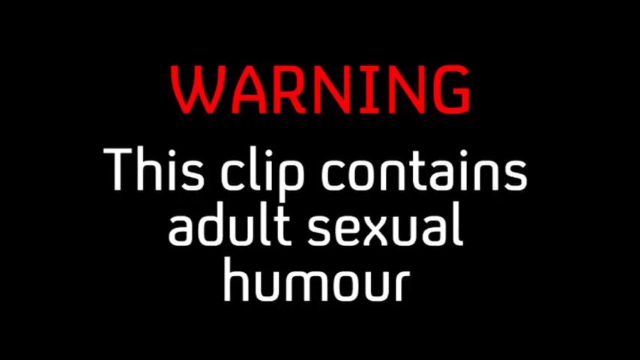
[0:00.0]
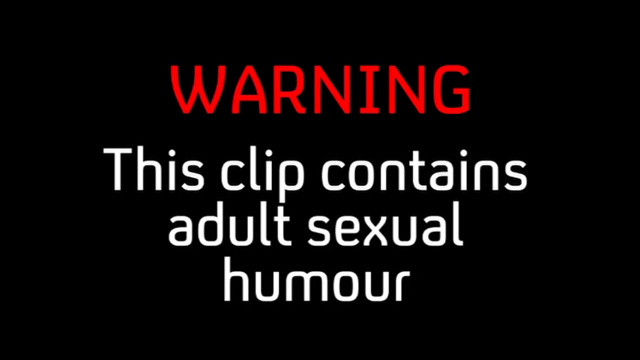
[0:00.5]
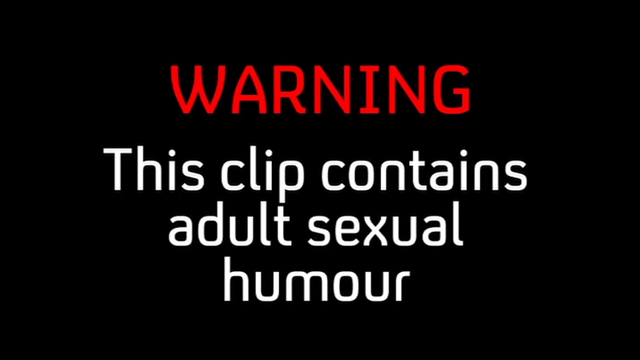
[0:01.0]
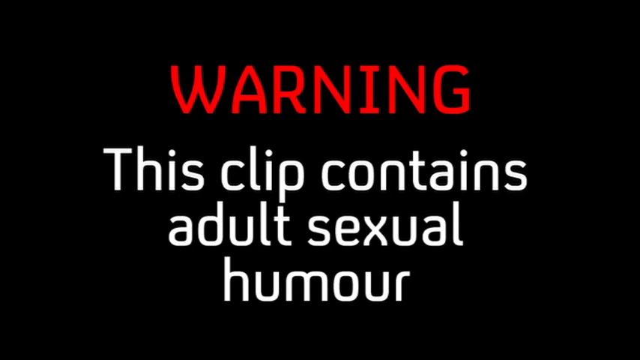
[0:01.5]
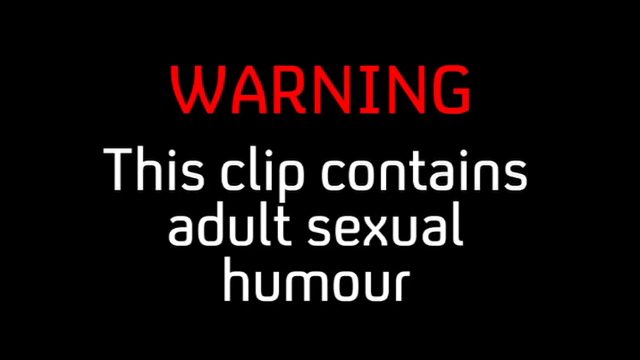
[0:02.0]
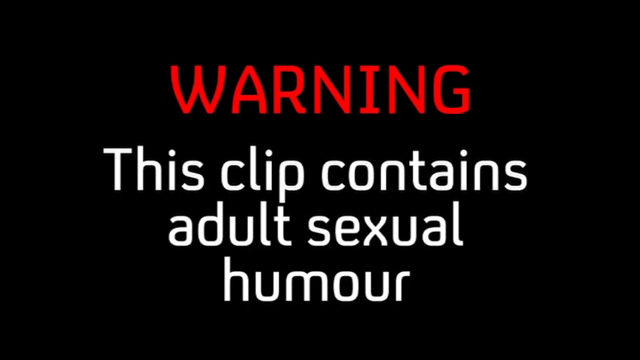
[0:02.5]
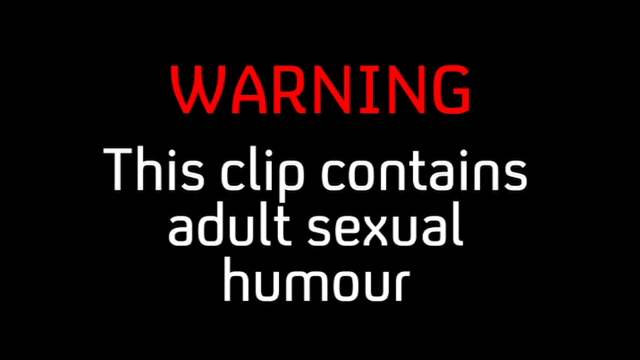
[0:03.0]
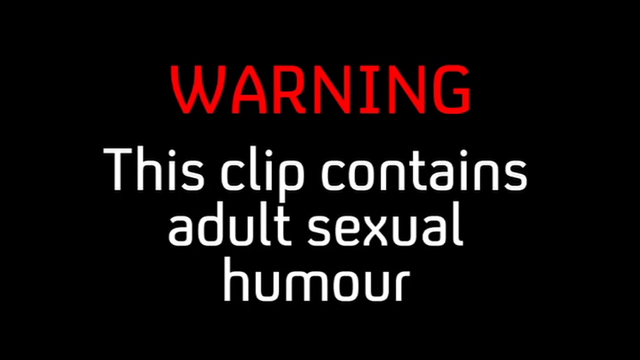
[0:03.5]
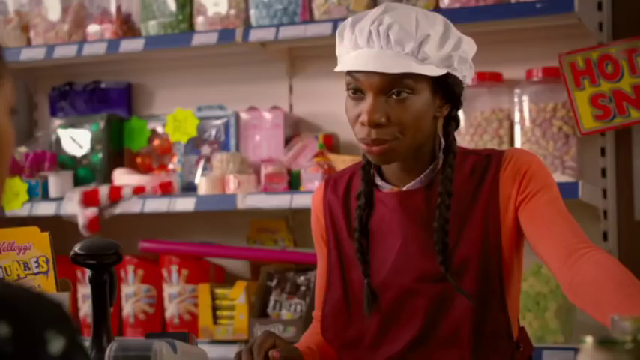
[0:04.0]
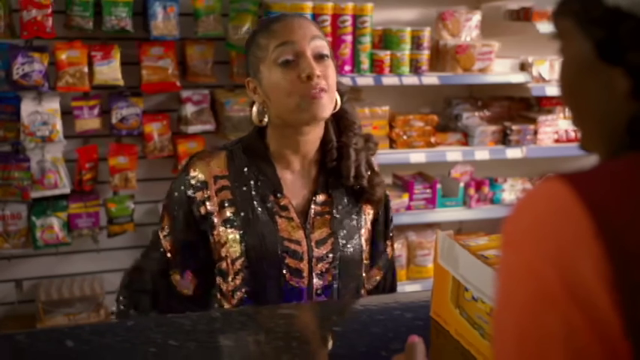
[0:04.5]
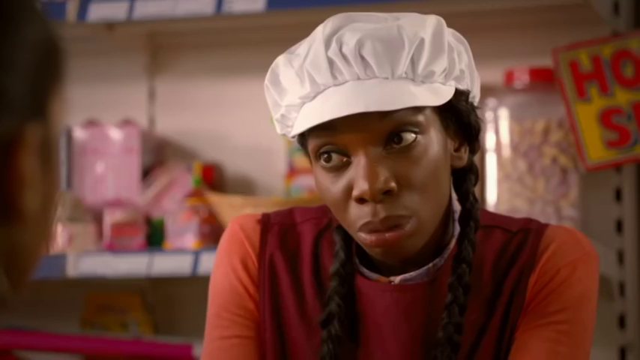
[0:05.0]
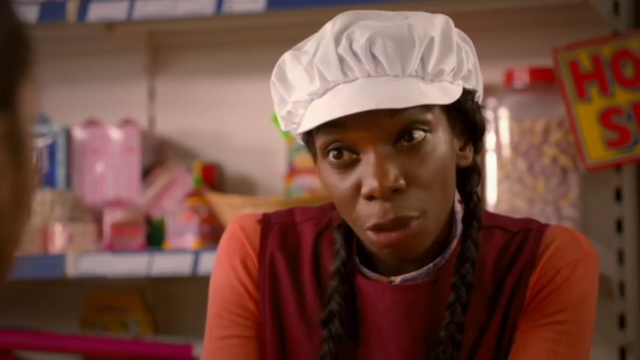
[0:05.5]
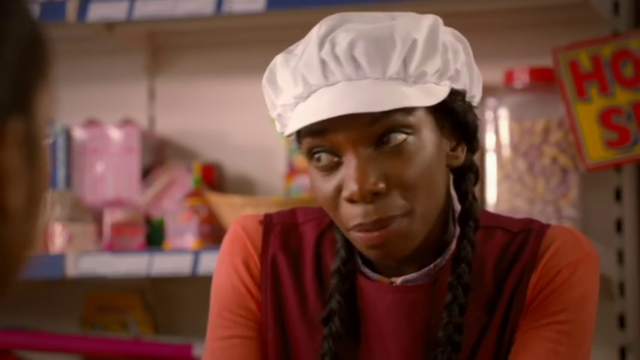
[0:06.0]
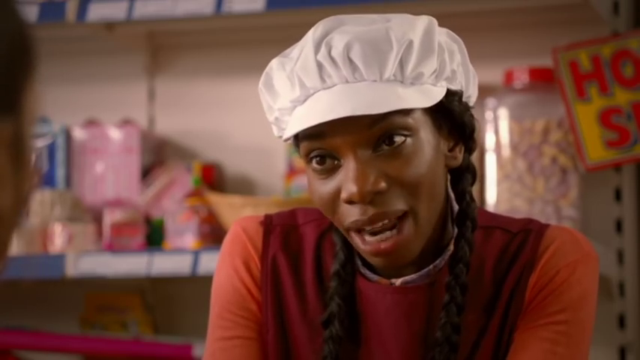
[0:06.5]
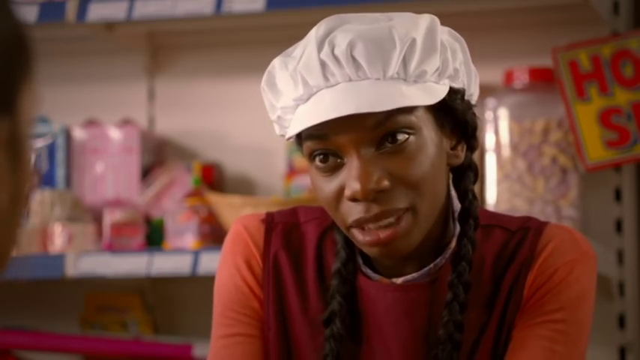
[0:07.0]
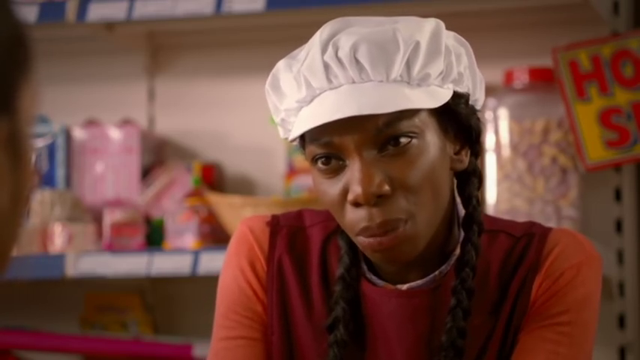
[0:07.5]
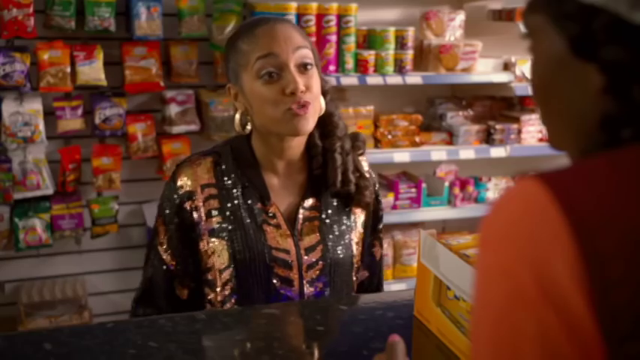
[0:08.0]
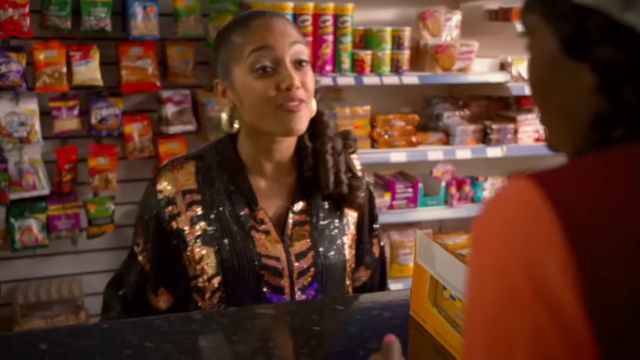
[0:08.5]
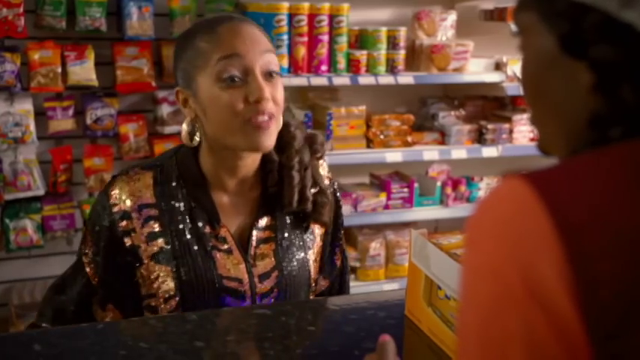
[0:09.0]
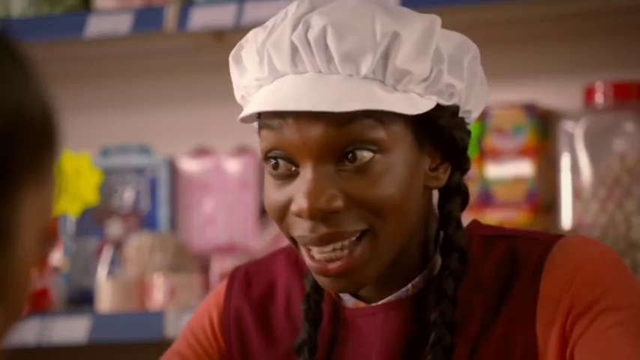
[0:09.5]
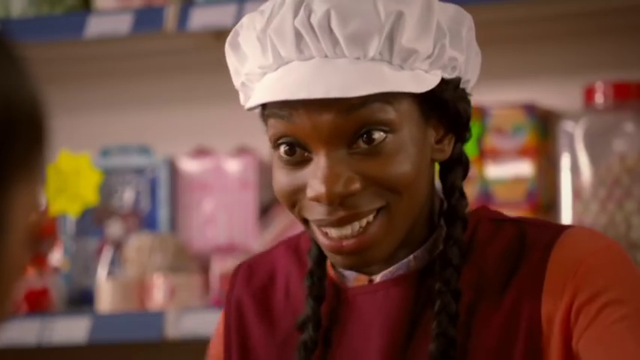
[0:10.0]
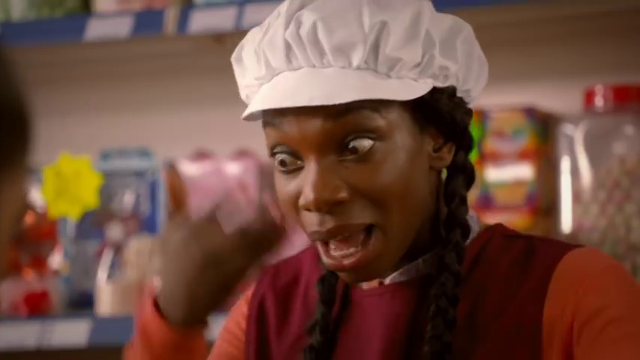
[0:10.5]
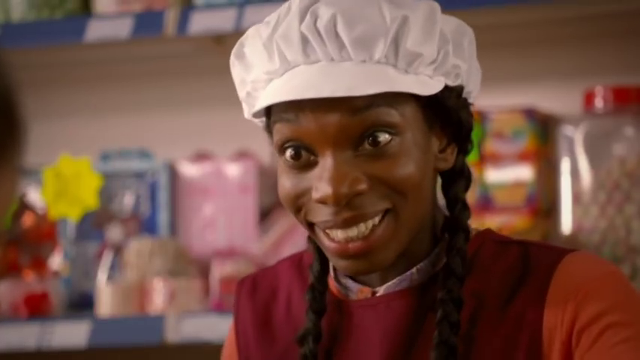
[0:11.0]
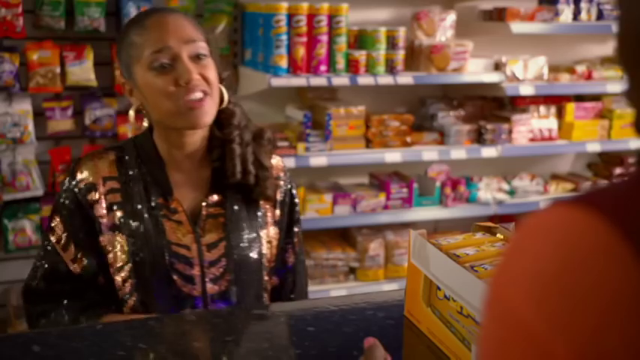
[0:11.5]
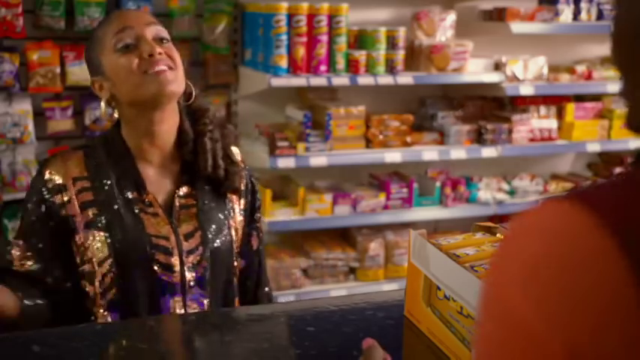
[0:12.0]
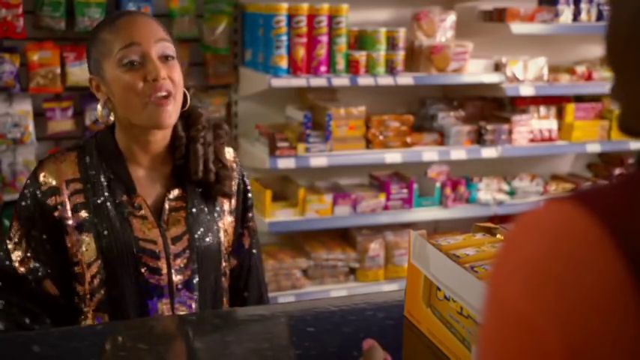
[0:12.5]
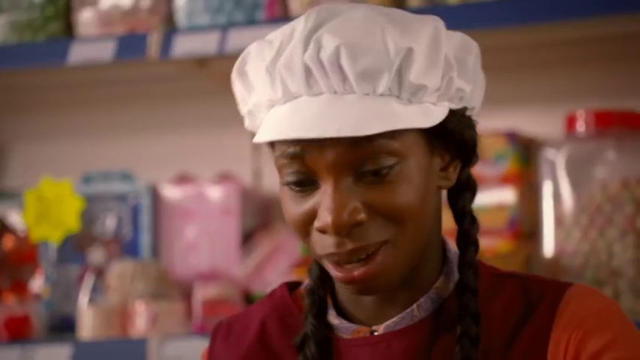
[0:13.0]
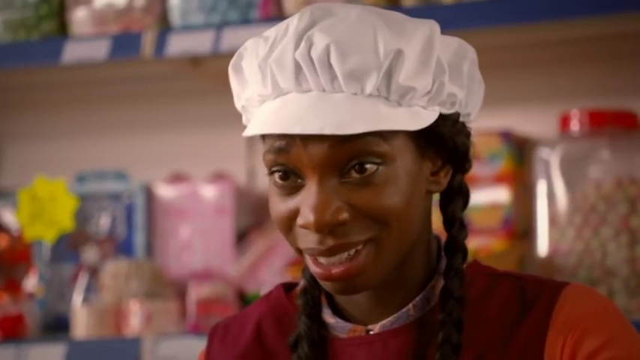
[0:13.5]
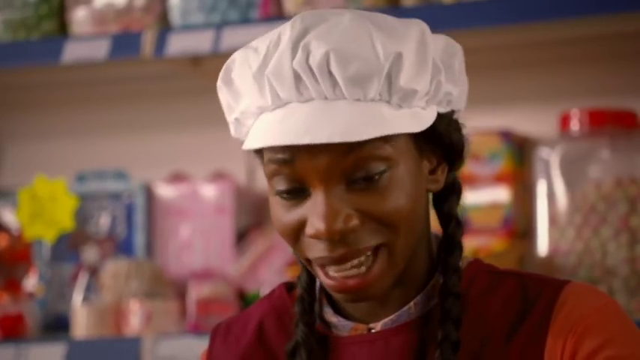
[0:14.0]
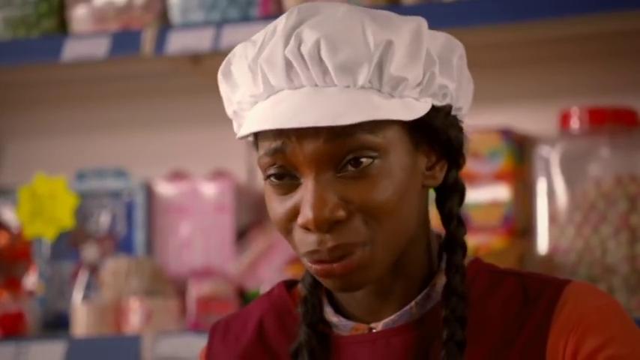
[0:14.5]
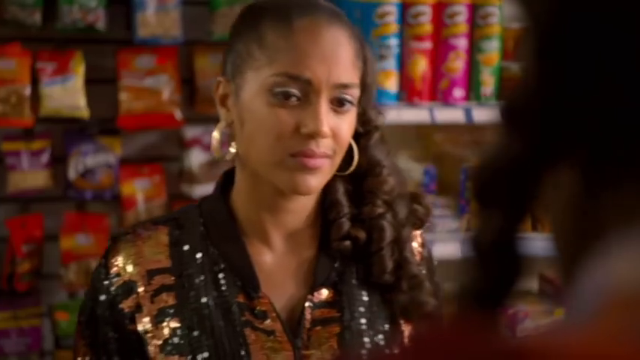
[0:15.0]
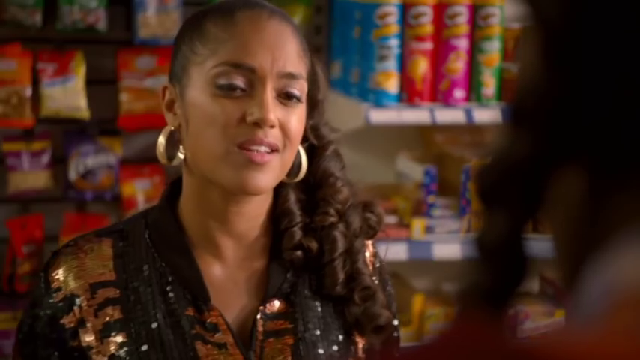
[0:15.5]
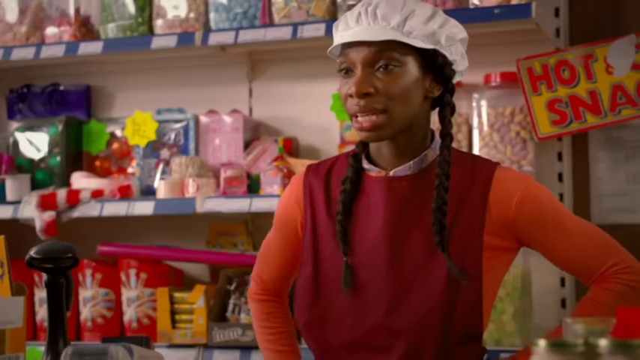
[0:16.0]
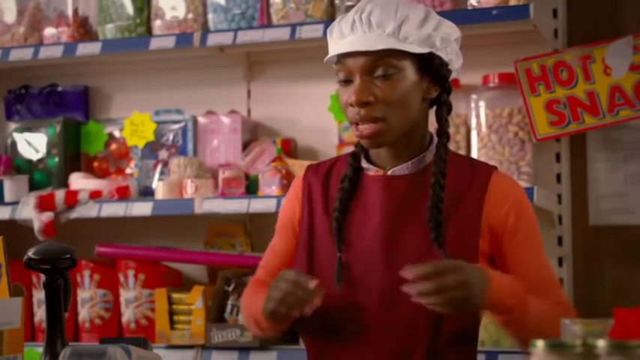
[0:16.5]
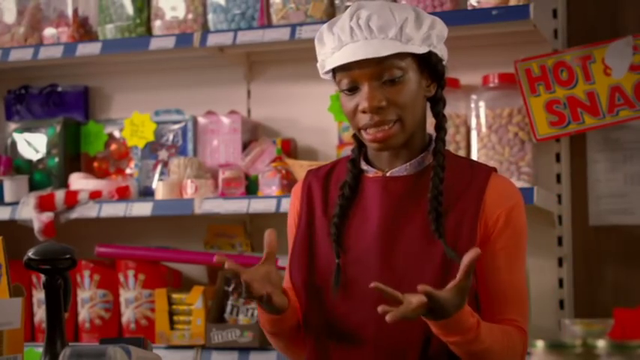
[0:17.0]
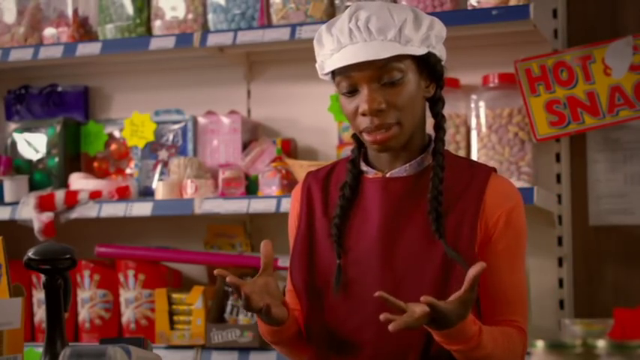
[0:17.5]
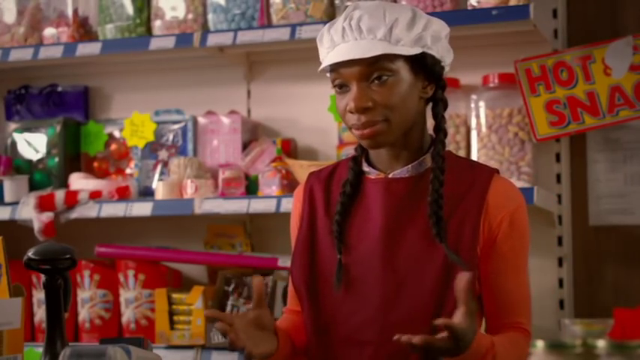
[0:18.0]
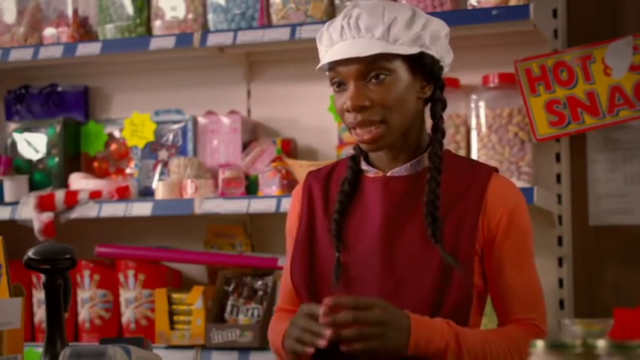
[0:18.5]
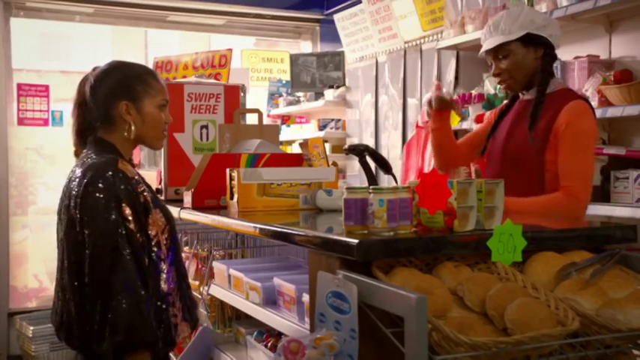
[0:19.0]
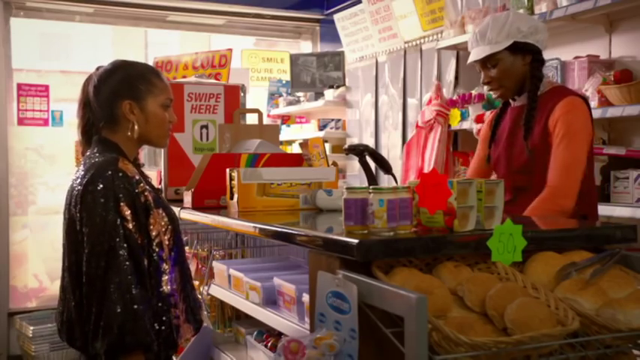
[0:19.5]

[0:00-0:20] The video opens on a black background, then shows text with "warning" at the top in red, and beneath it, in white, "This clip contains adult sexual humour." Next a woman appears: she is a Black American with long, curled black hair, gold earrings, and a black and gold shirt. Behind her are food packages, sweets, biscuits and Simba's hanging on shelves, and the wall of the shelf is white with black lines running from left to right. She is talking to another woman, a Black African woman in a white cap with black braided hair and an orange shirt; behind her are food stocks and a white wall. The video alternates, showing the two women one at a time. The woman in the white cap seems surprised by whatever is being said, and as they talk she actively uses her hands to communicate; she looks like she is wearing a red apron.